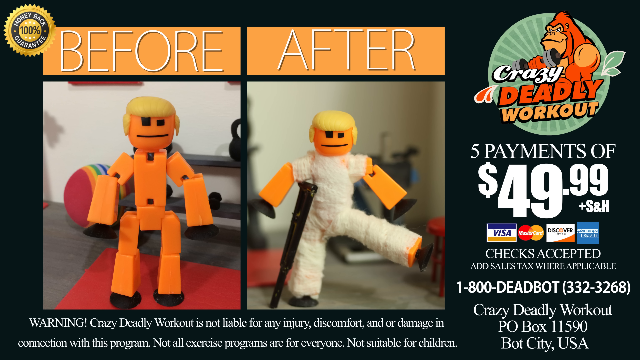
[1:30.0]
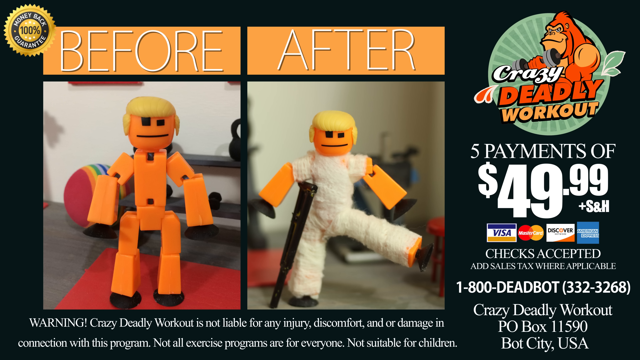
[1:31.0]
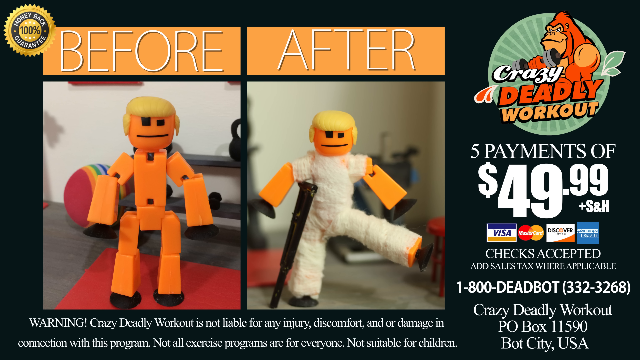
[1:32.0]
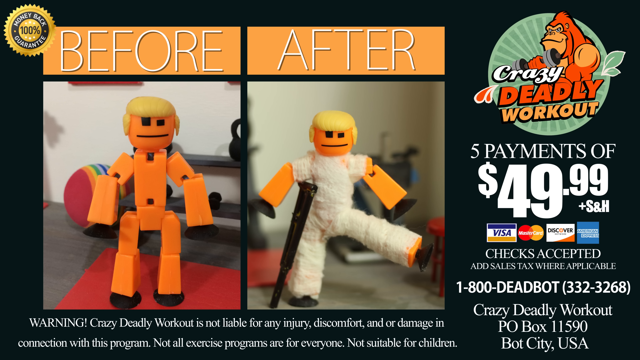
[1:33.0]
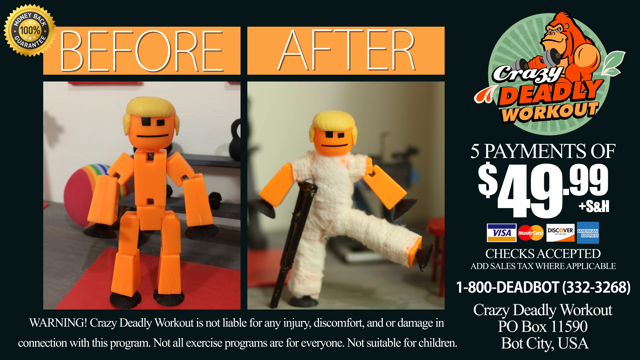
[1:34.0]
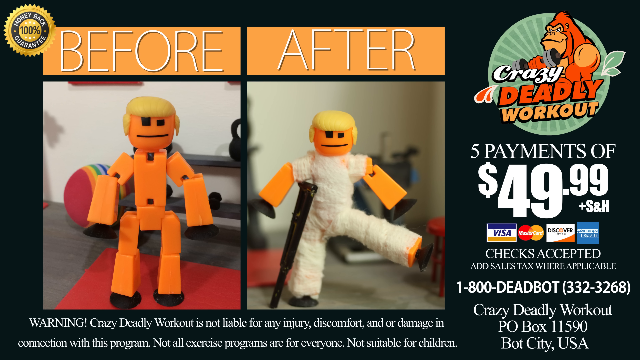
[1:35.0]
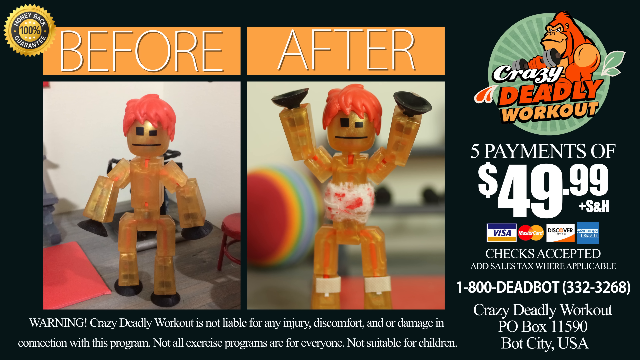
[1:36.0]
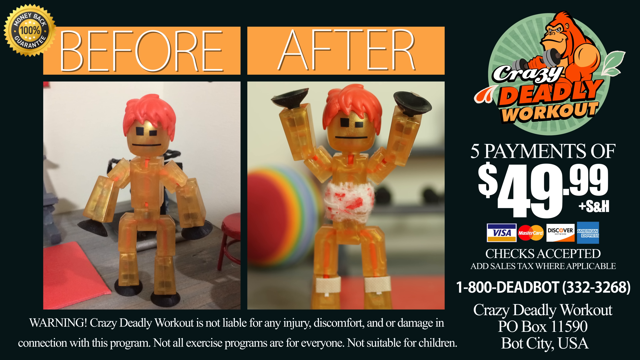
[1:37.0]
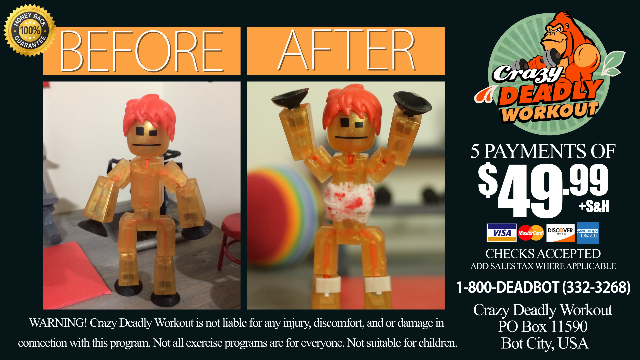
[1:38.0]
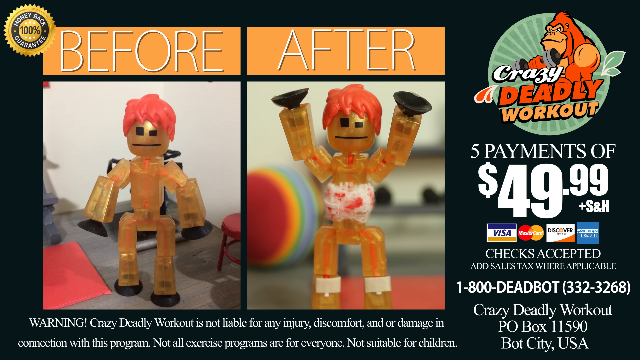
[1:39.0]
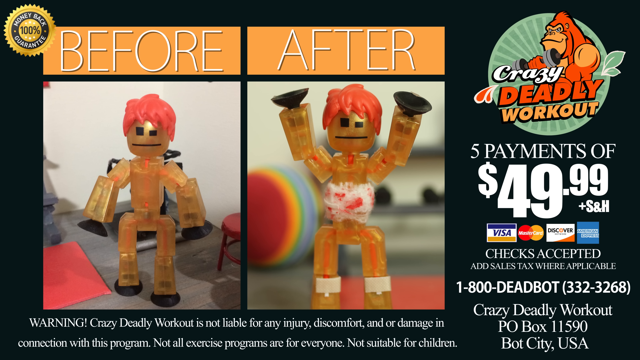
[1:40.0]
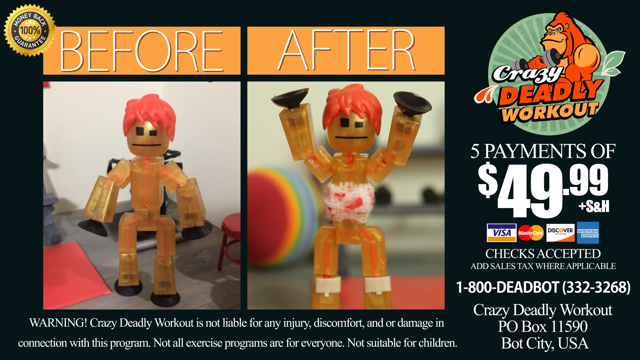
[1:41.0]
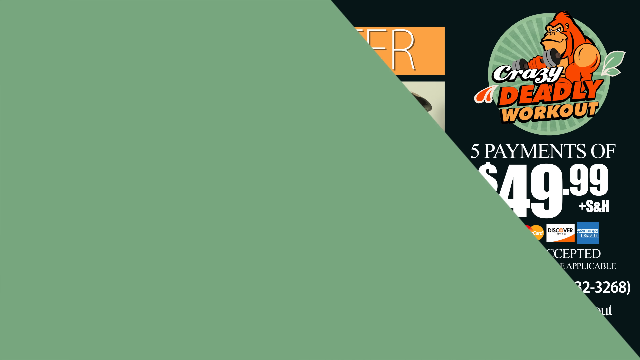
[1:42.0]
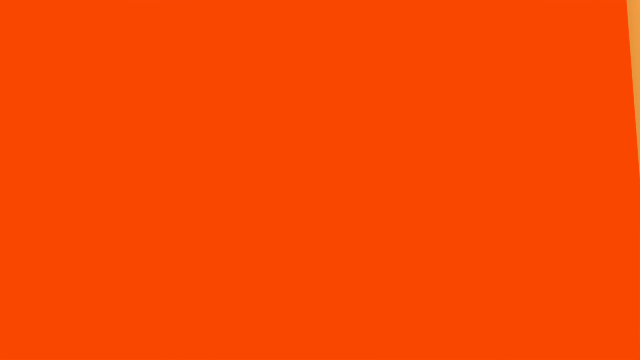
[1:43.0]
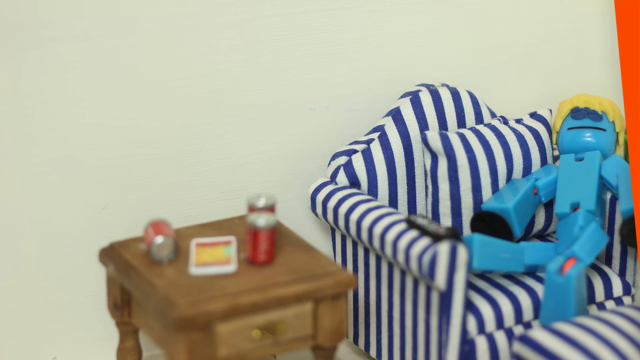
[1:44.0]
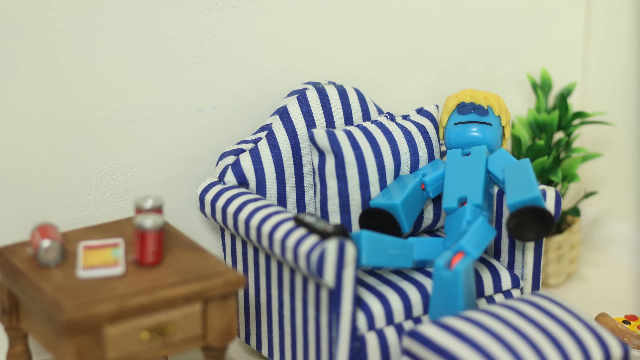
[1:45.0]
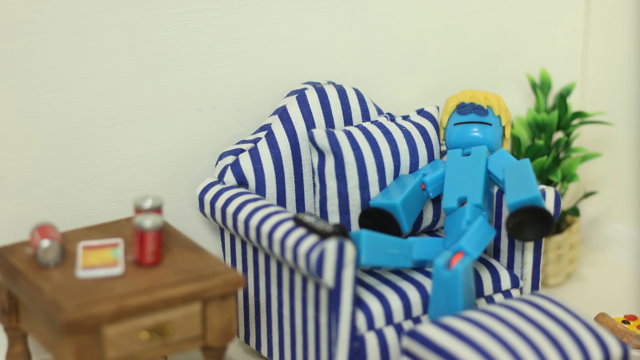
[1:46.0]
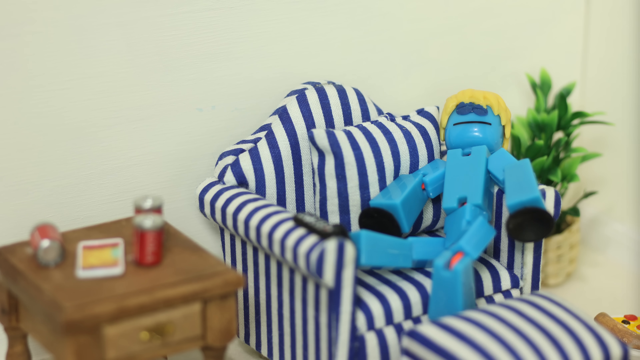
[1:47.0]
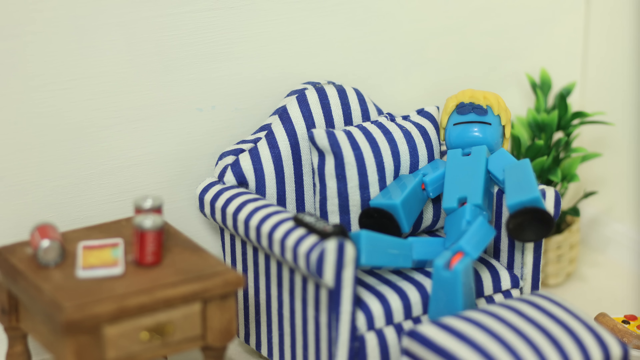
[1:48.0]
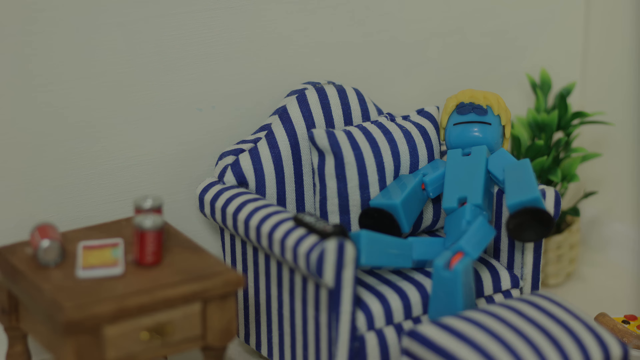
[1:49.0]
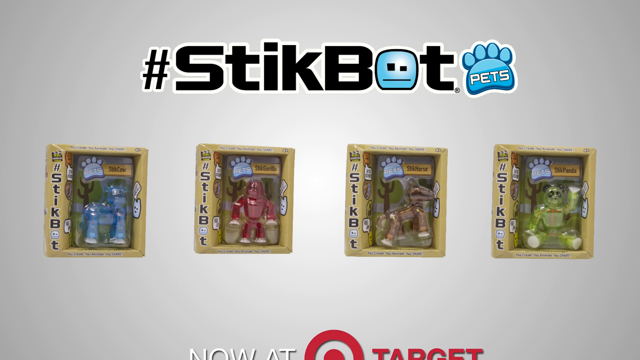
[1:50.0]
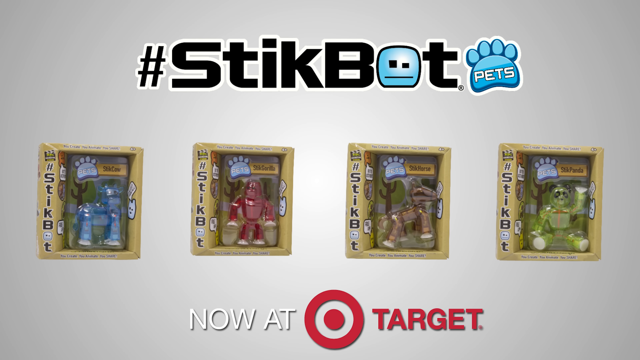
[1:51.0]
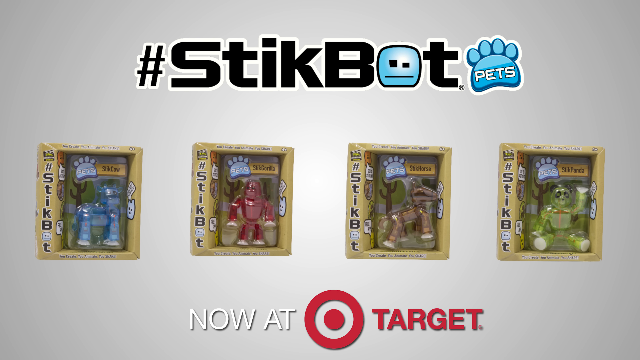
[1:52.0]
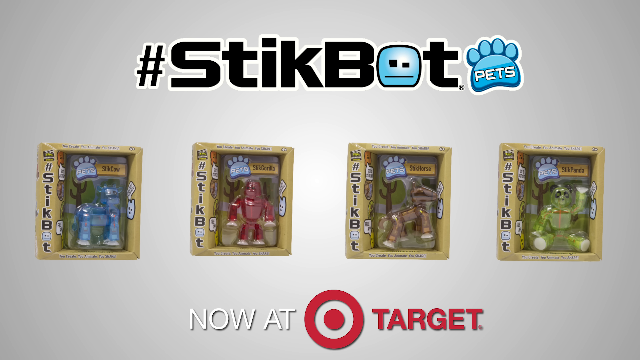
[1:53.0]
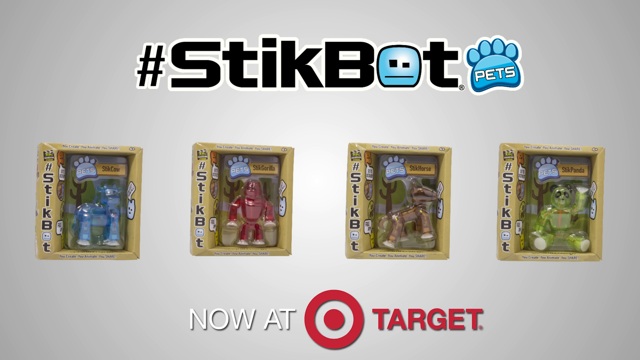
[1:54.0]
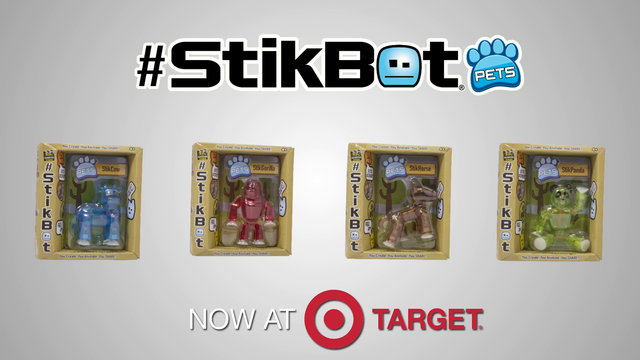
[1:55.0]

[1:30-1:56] One of the Lego-type guys, like a play toy, is in a full body cast, and another guy has something around his belly, possibly white with some red that could be blood. The blue guy is passed out on the blue striped chair with an ottoman, kind of lying there. The figures are called stick bots and are available at Target. There are stick bot sets such as a horse and a dog, and stick bots in different colors: yellow, red and orange. The ad shows "now available at Target". The stick bots have a big square eye, a smaller rectangular eye, and a straight line for a mouth.